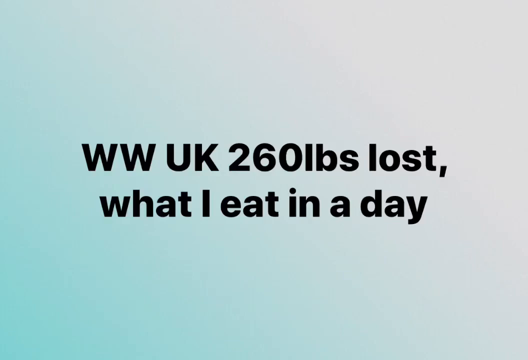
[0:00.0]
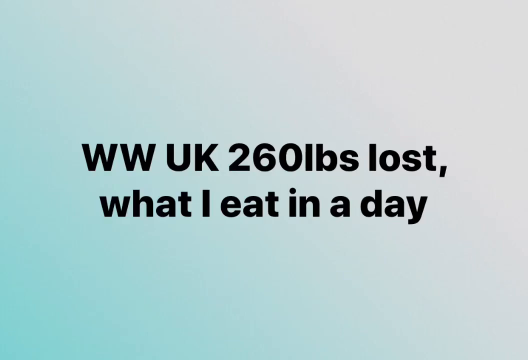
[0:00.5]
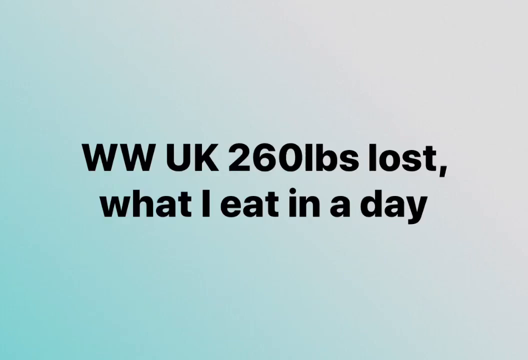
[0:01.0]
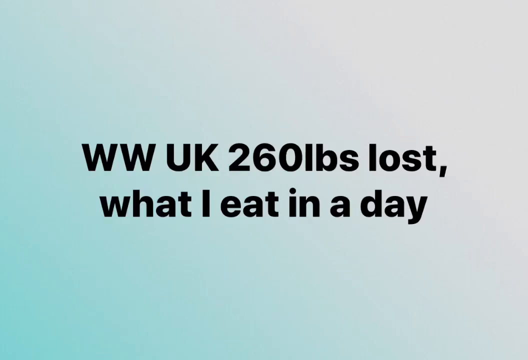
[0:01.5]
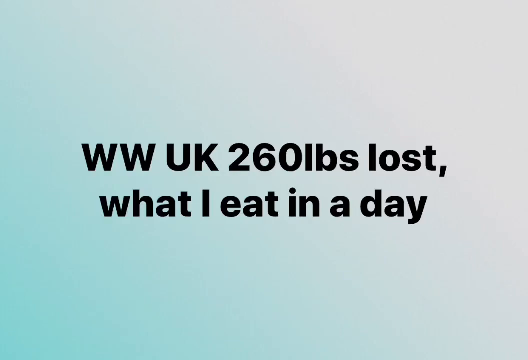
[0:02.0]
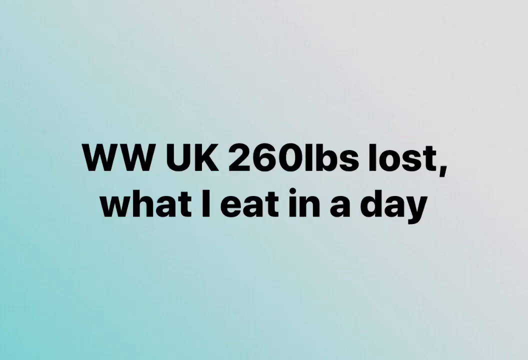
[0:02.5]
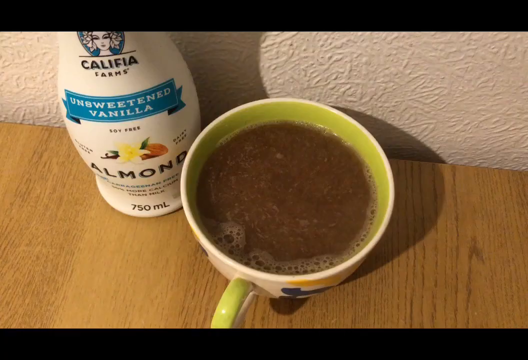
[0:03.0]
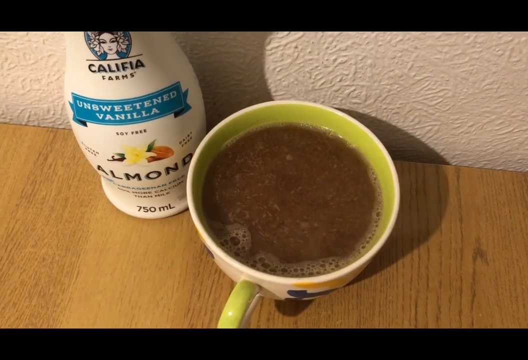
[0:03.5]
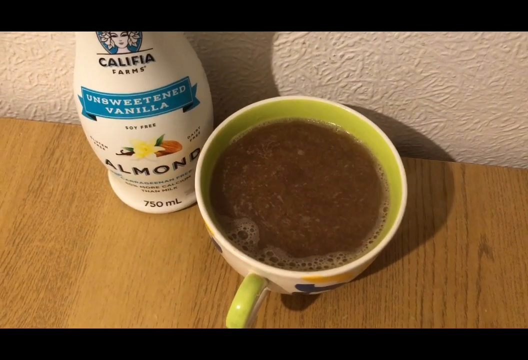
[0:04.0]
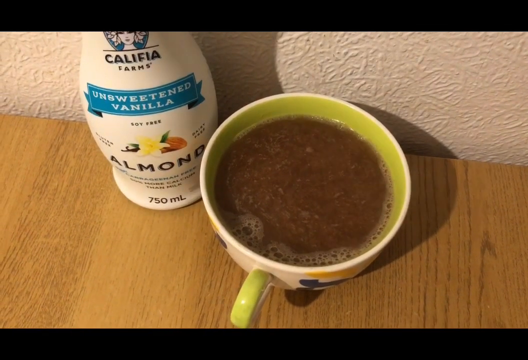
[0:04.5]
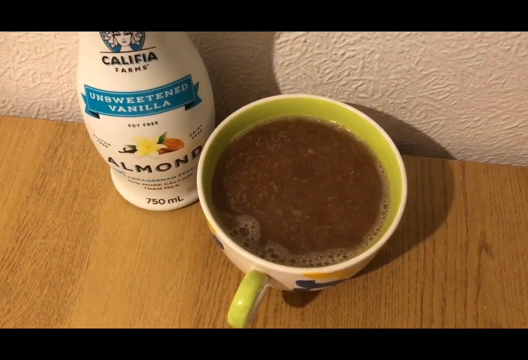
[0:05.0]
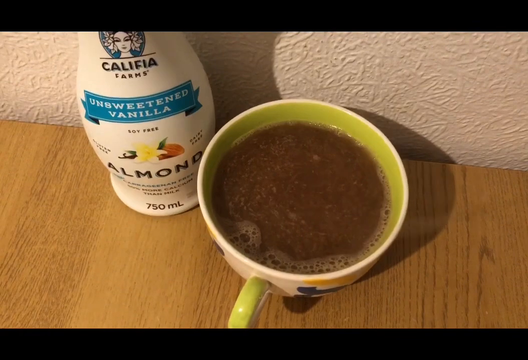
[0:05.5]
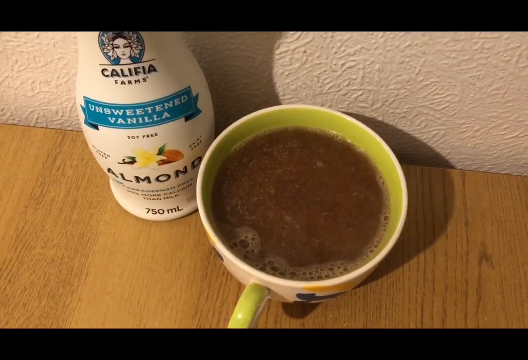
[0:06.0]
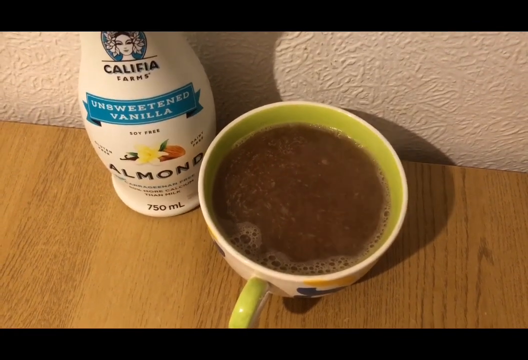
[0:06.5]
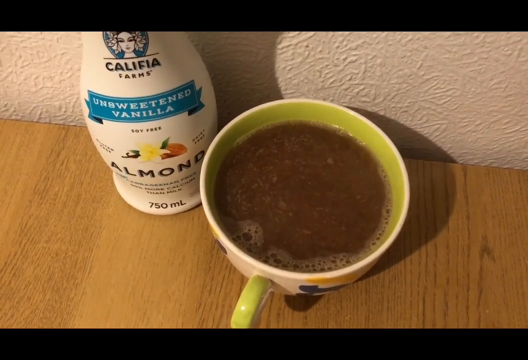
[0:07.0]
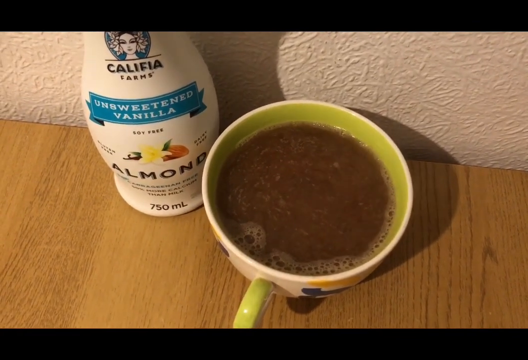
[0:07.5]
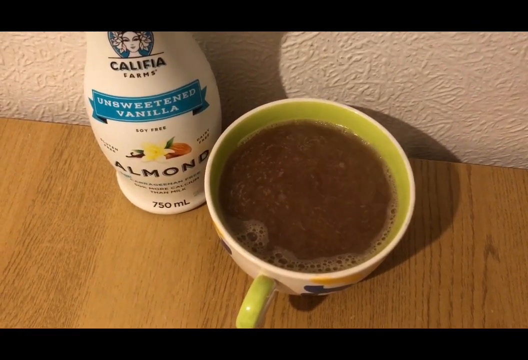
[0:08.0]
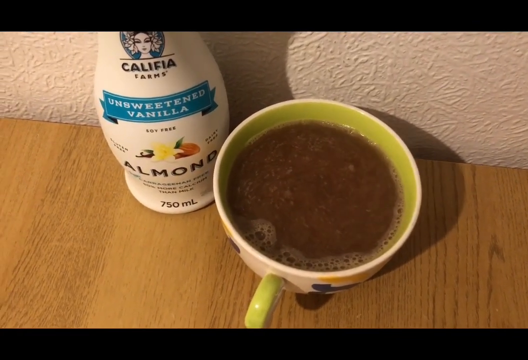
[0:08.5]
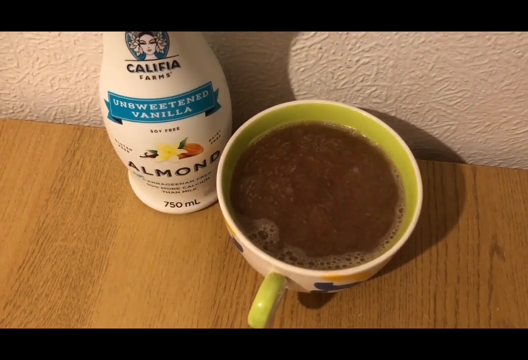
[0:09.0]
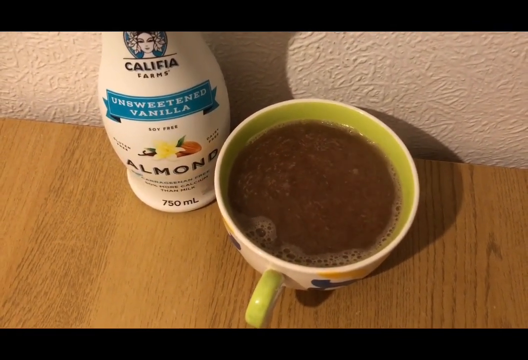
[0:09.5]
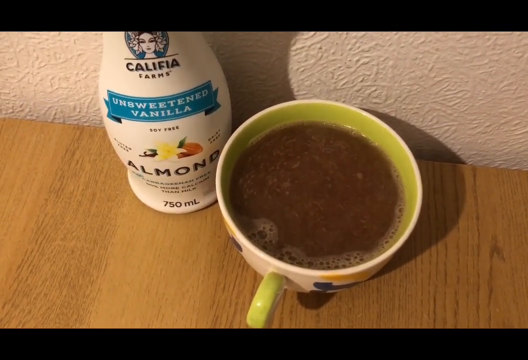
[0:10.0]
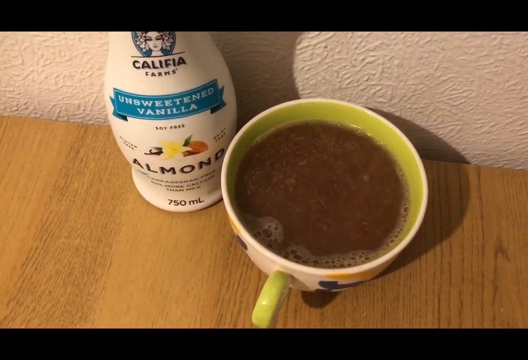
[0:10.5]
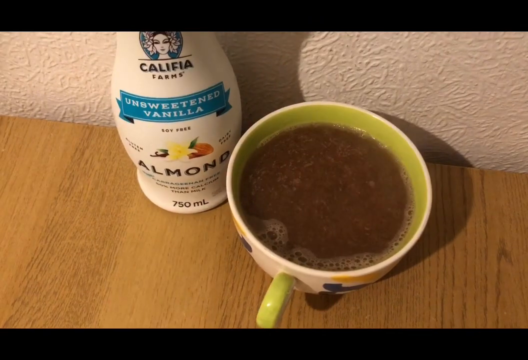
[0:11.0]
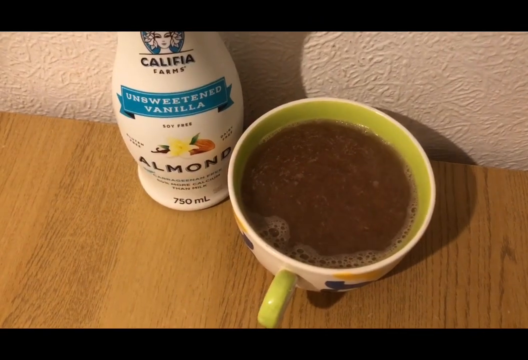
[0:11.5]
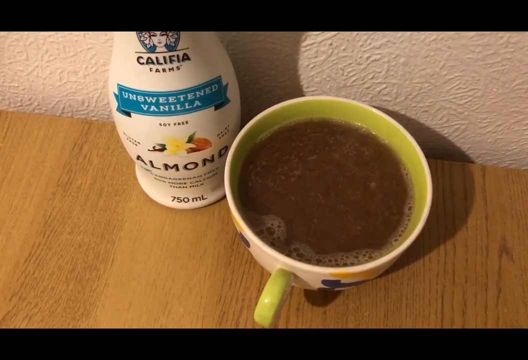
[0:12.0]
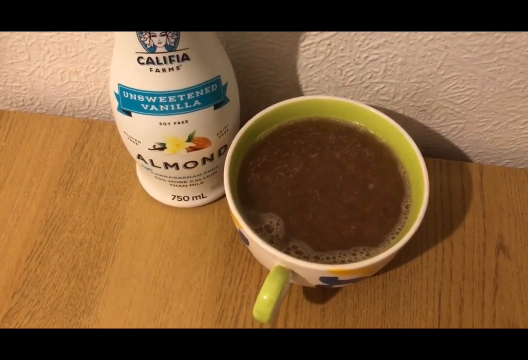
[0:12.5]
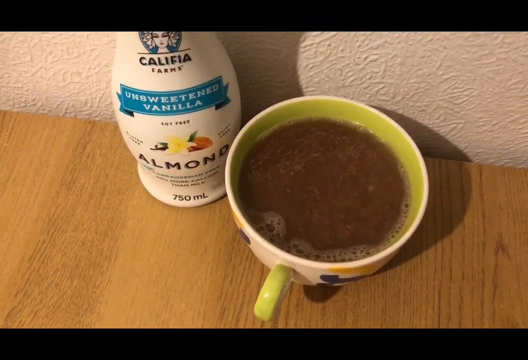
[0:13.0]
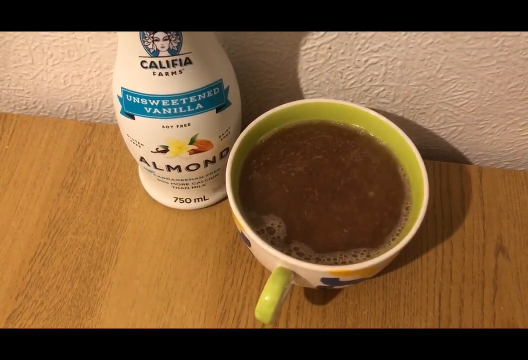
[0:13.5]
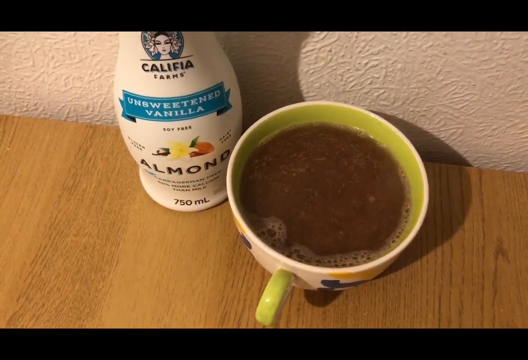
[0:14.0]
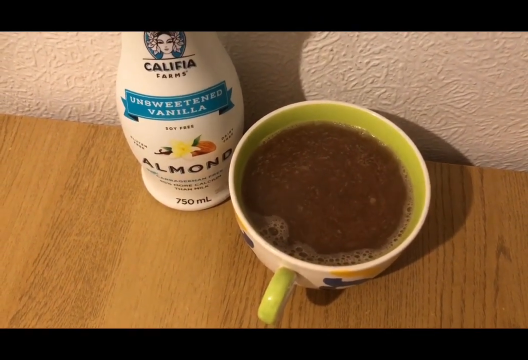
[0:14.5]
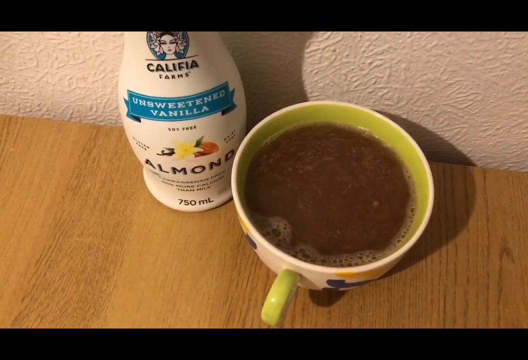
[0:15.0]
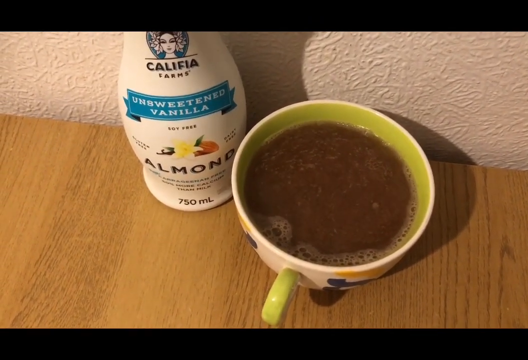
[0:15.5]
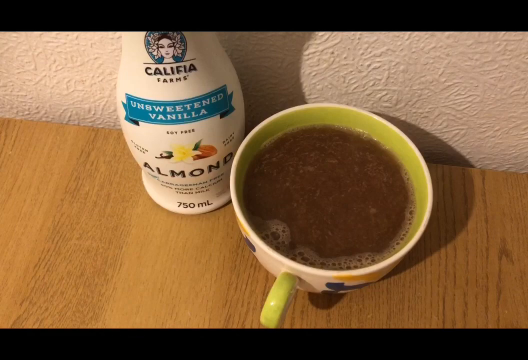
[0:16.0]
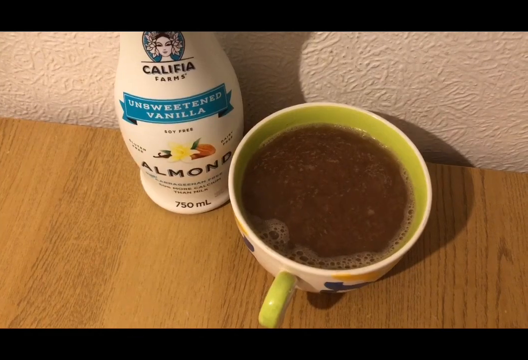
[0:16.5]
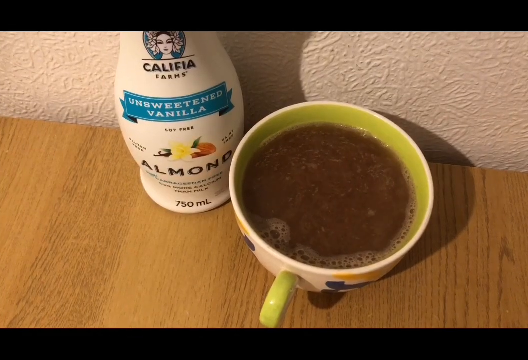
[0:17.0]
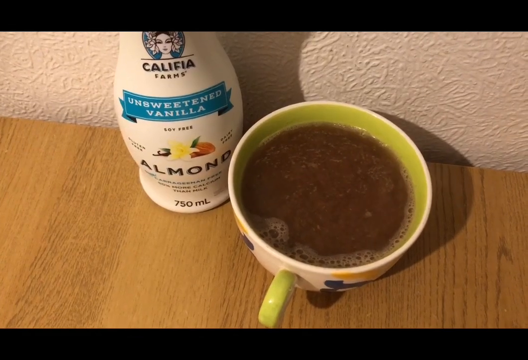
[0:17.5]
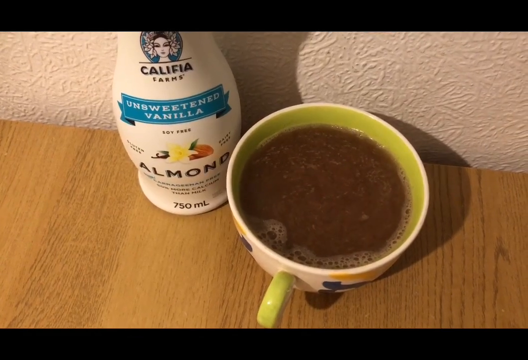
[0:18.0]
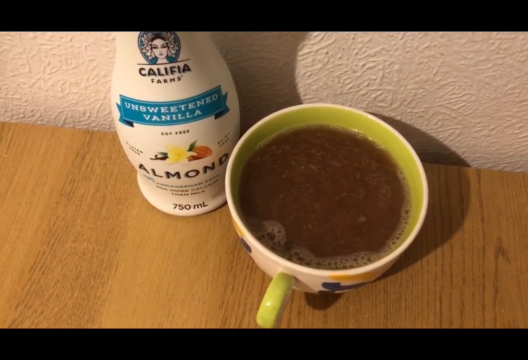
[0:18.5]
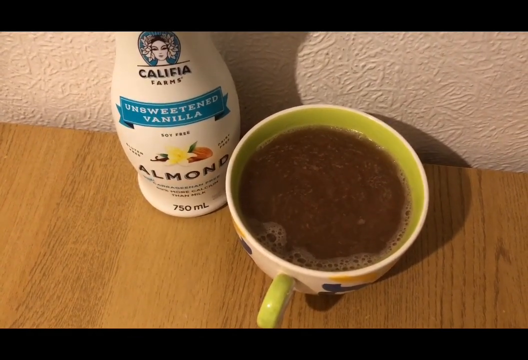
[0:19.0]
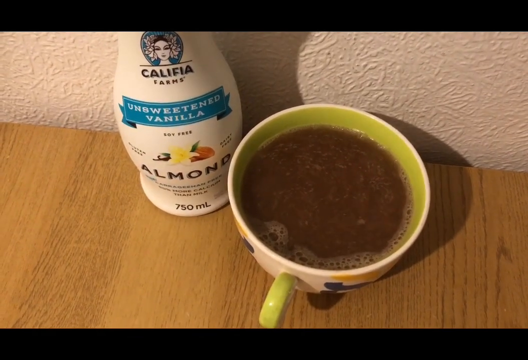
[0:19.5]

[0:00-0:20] The video opens on a light blue screen with a gradient that turns more of a light gray toward the right side. In the middle, black text reads "ww uk 260lbs loss, what I eat in a day." The video then changes to a large light green cup on a light brown table, apparently filled with brown coffee, seen looking down at the top of the cup. Next to the cup is a large white container that looks to be almond milk, with something like a blue ribbon on the front that says "unsweetened vanilla"; it is from the Califia Farms brand. A little steam comes from the cup of coffee. The person seems to be standing in front of the table, filming down at the coffee for a few seconds.